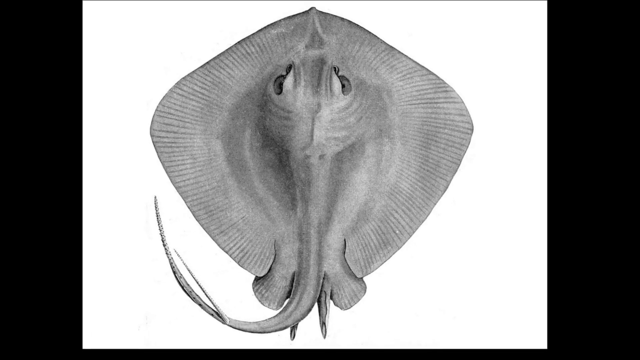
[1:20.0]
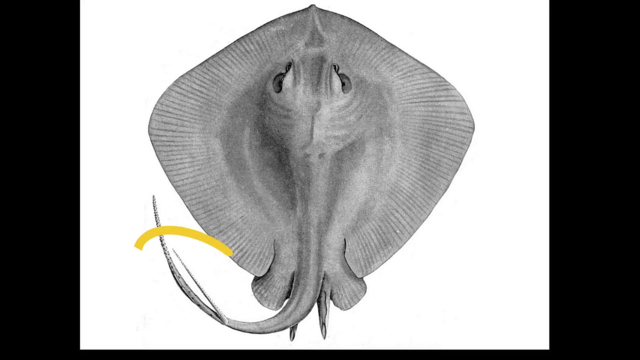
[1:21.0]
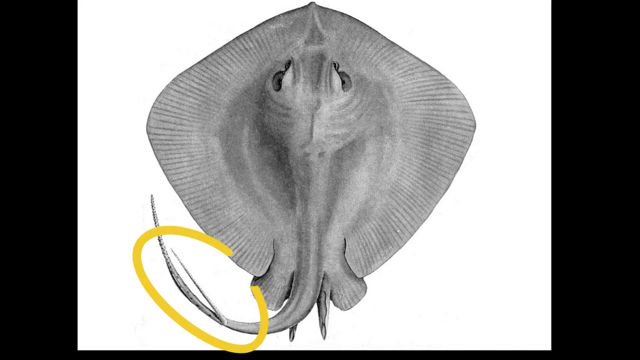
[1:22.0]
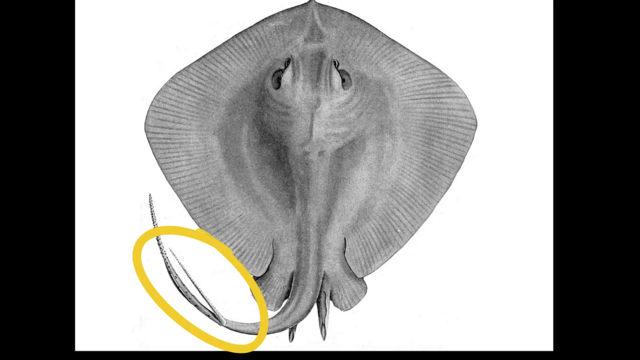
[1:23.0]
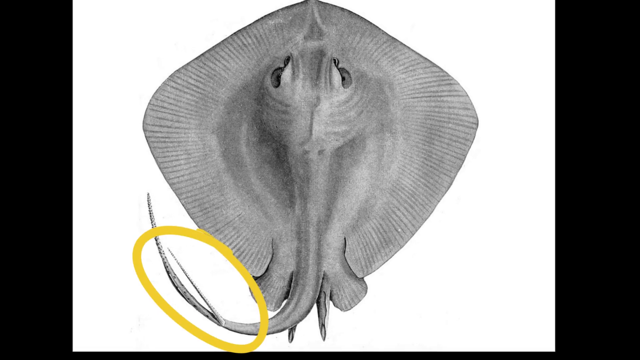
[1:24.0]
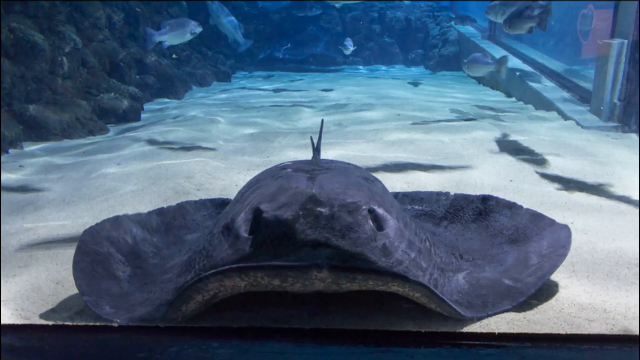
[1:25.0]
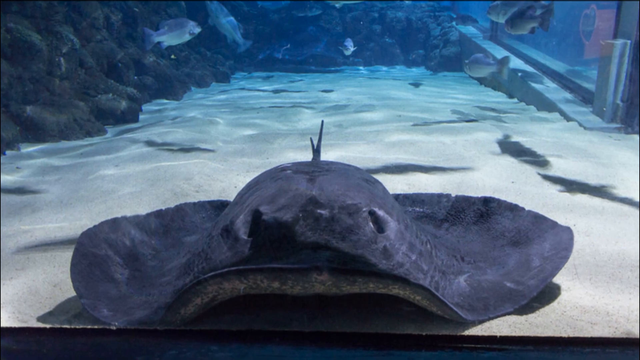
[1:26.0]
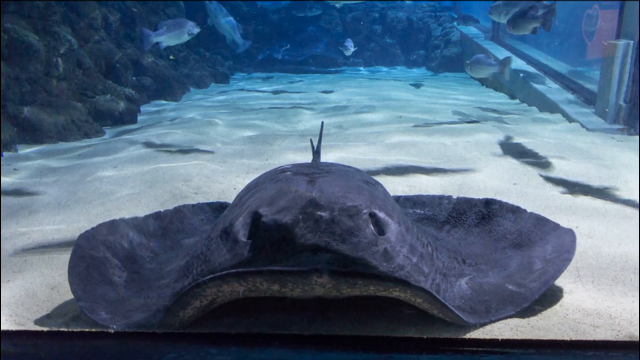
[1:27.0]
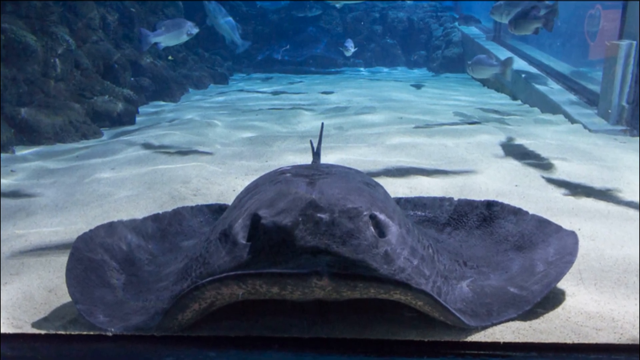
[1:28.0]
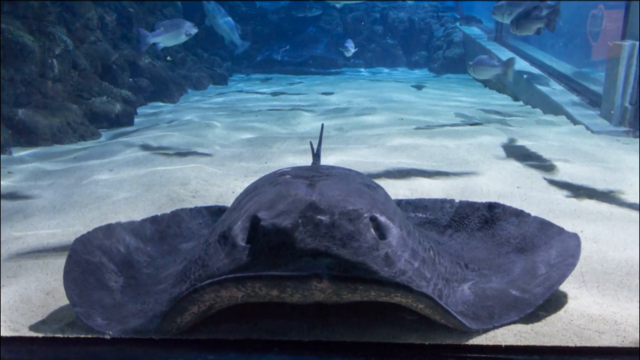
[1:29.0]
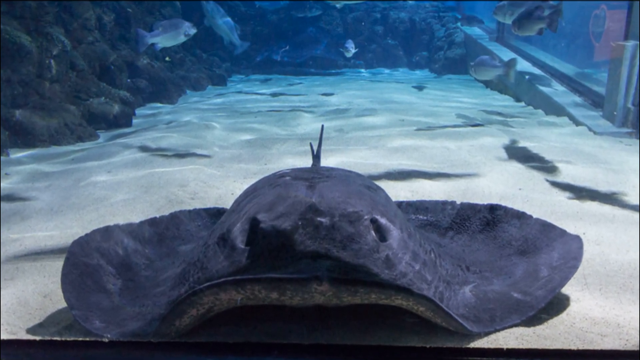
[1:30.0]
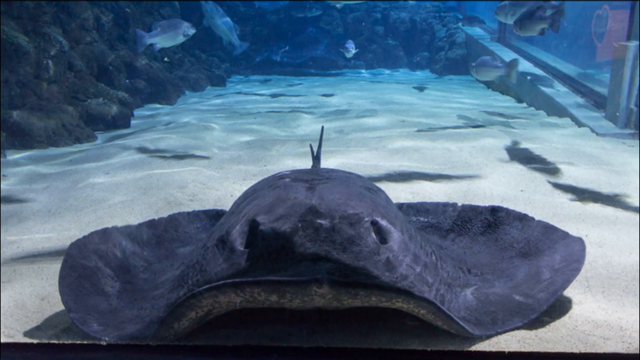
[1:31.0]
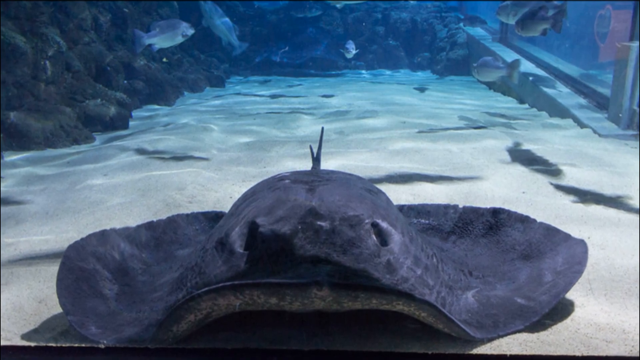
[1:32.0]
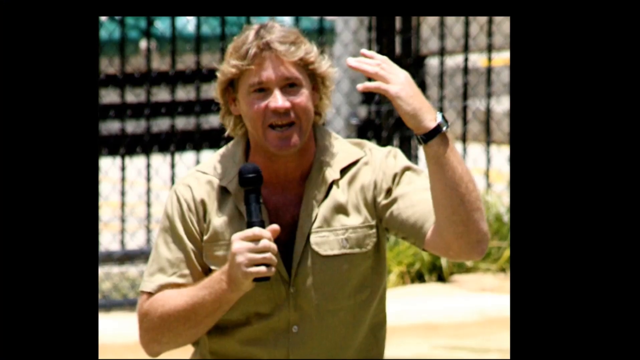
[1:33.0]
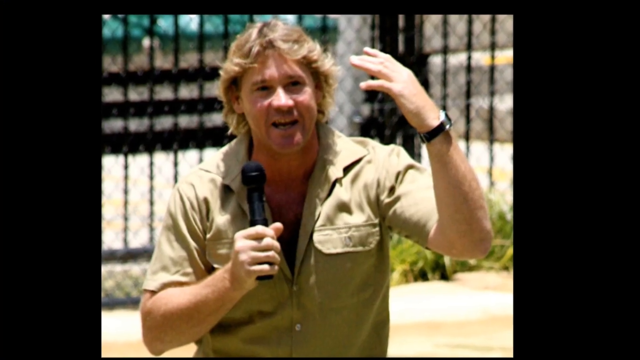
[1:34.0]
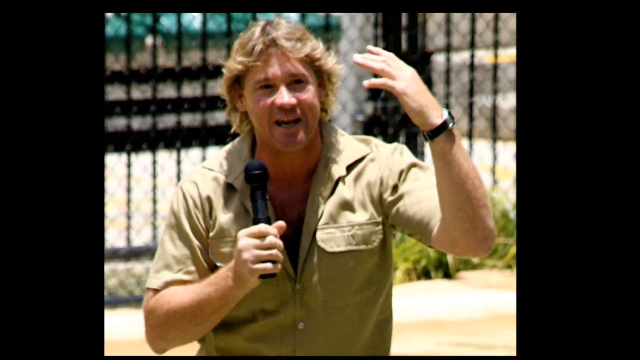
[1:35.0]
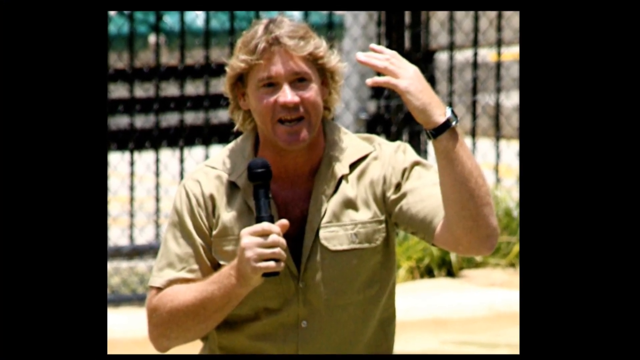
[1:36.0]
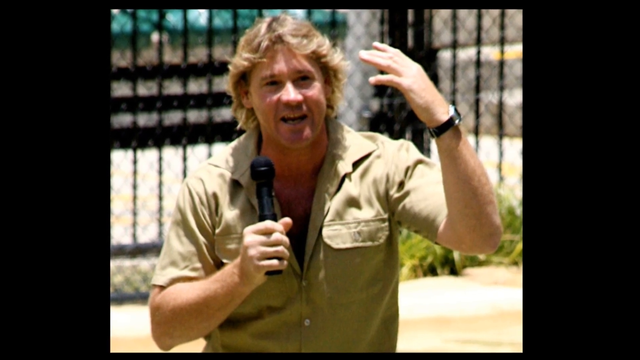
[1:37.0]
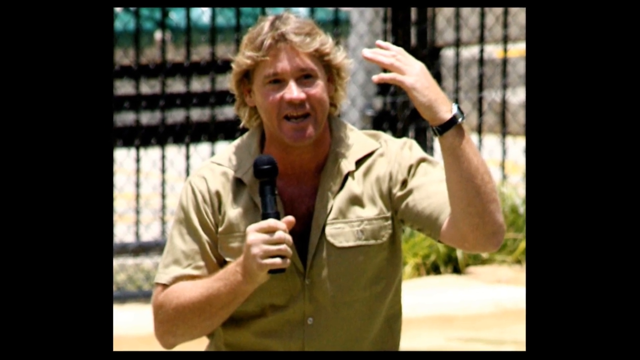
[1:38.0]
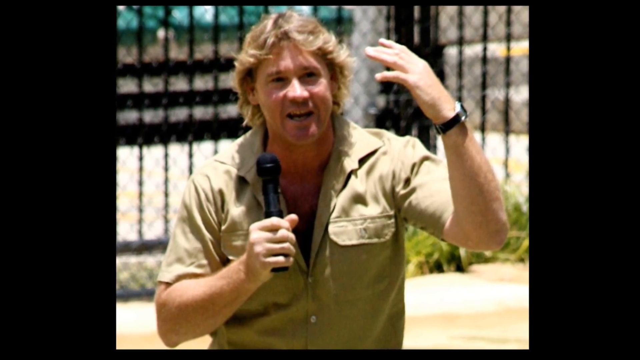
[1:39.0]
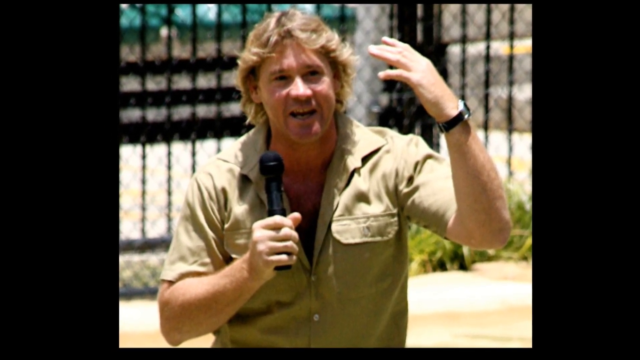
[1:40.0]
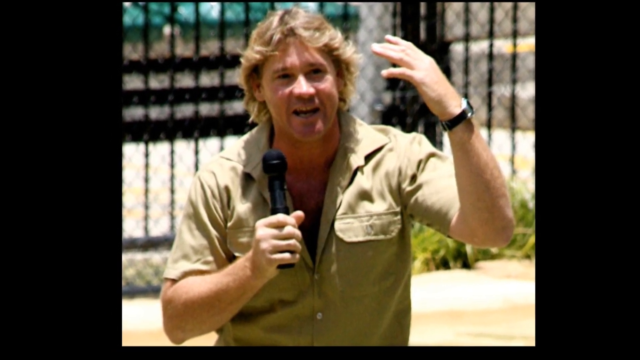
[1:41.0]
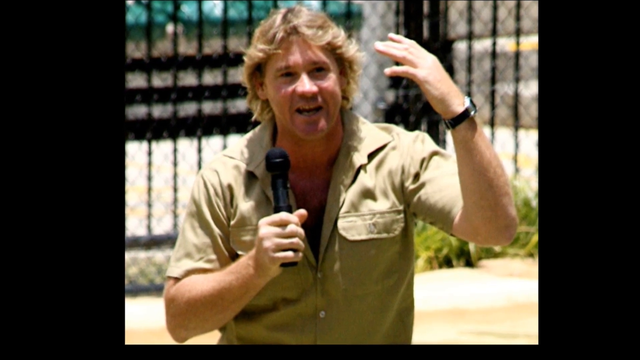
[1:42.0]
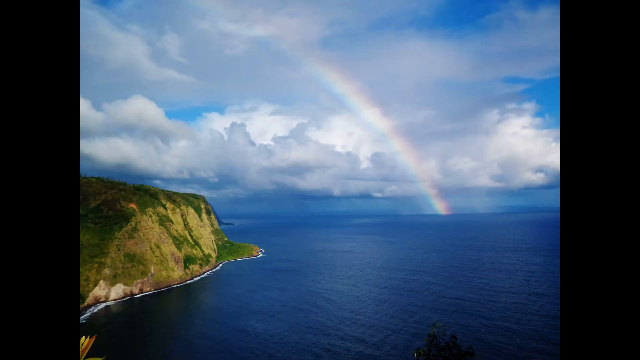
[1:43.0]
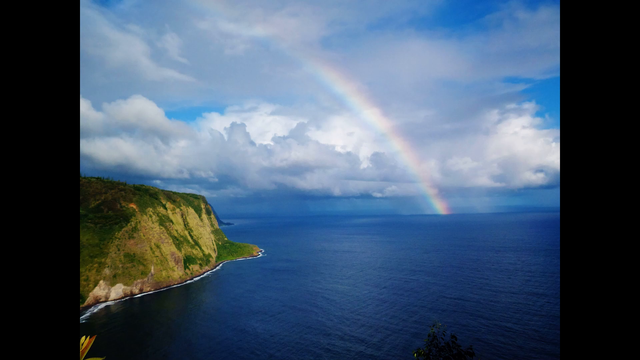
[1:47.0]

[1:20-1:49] A picture shows a top-down, grayscale view of a stingray. A yellow marker circles the tail part of the stingray. The stingray has two holes near the frontal part, which may resemble its eyes. Next, a different view shows a stingray hovering on the ocean floor, with two eyes near the front. This stingray is dark gray, and some fish swim above it, their shadows visible around it. Next, a photo shows an animal adventurer or sort of ecologist with blonde hair, wearing a safari-type shirt. He holds a mic in his right hand and makes some sort of hand gesture with his left. In the next picture, a rainbow stretches across the ocean and into the clouds, with a brown and yellowish rocky cliff on the left side. The ocean is very blue.